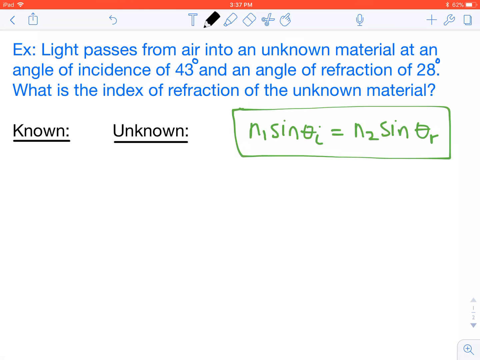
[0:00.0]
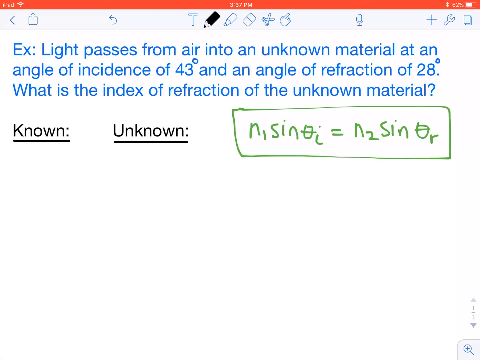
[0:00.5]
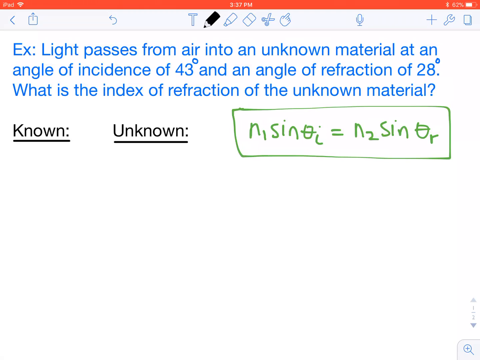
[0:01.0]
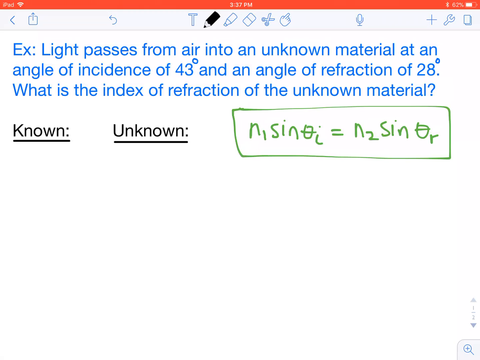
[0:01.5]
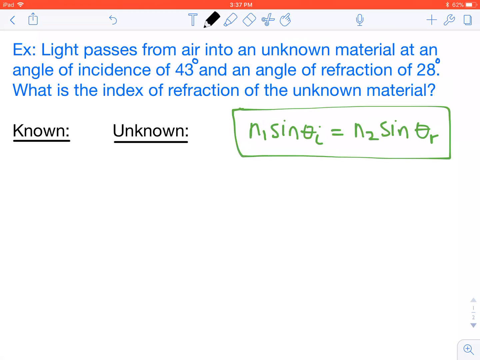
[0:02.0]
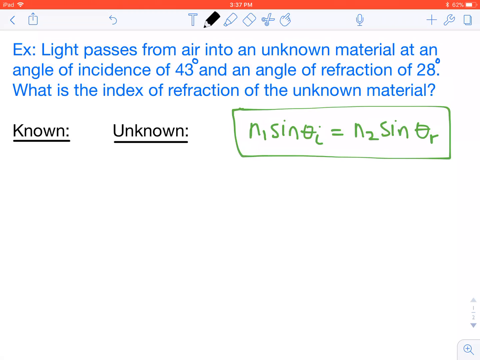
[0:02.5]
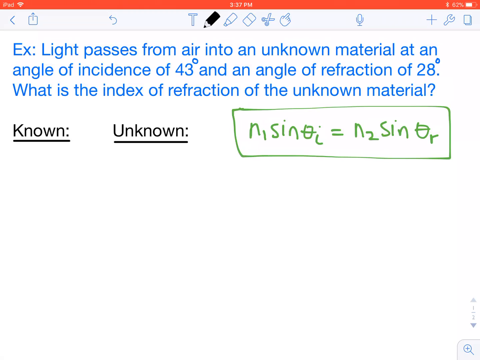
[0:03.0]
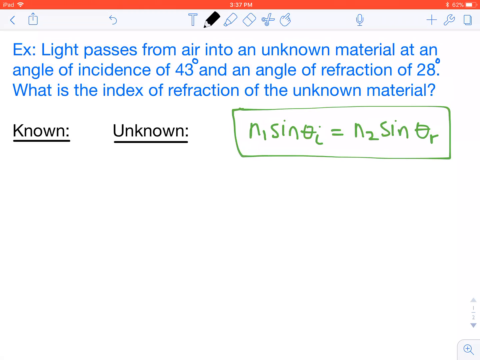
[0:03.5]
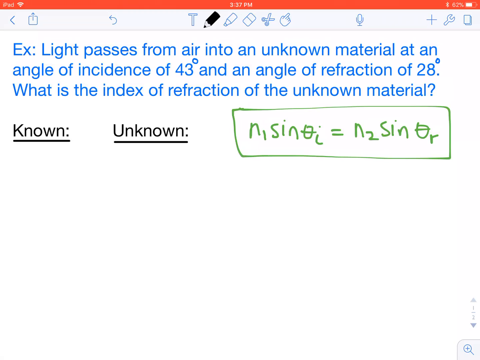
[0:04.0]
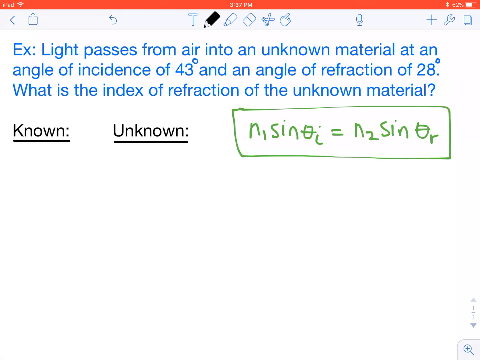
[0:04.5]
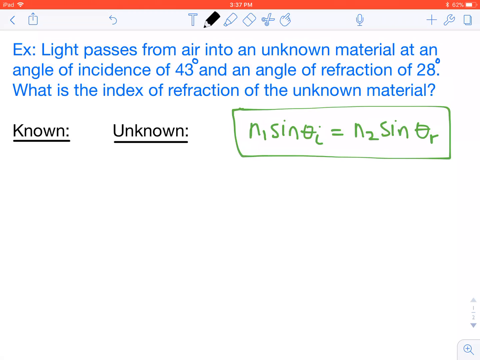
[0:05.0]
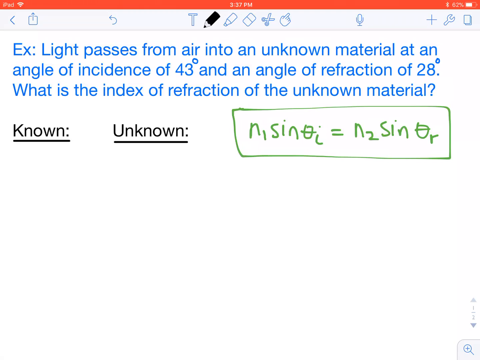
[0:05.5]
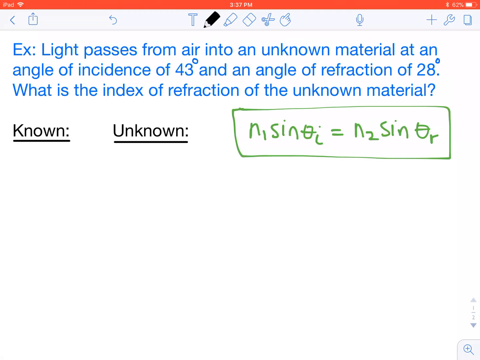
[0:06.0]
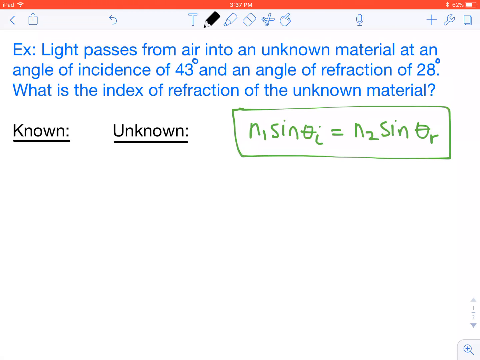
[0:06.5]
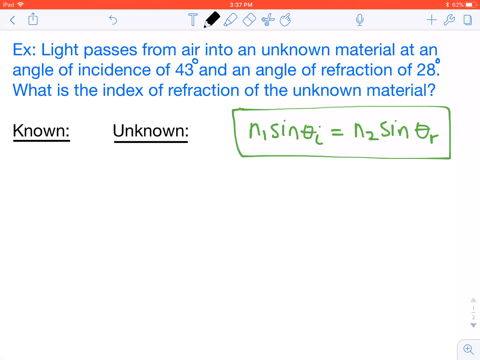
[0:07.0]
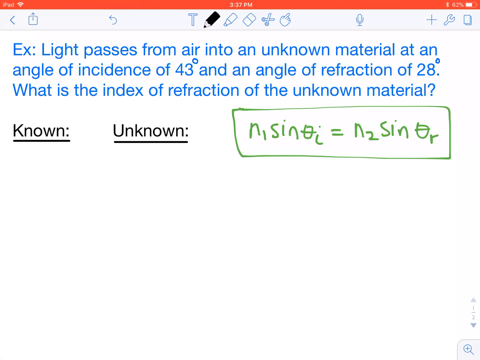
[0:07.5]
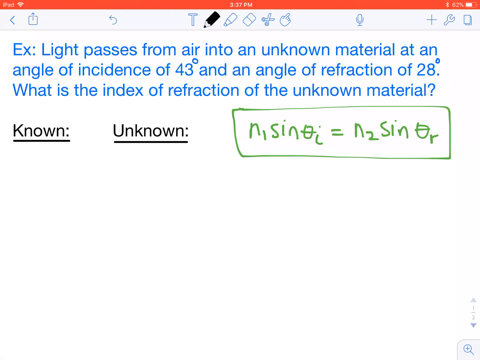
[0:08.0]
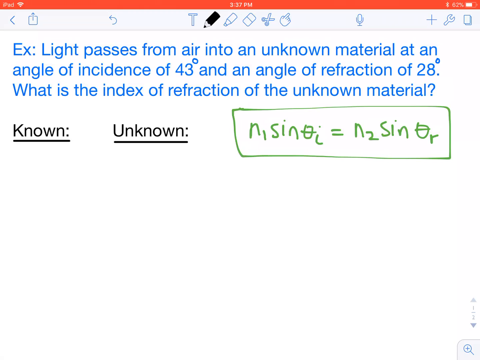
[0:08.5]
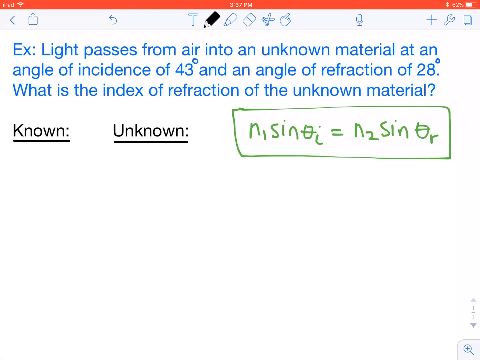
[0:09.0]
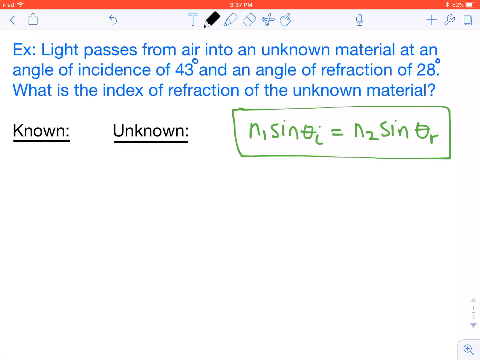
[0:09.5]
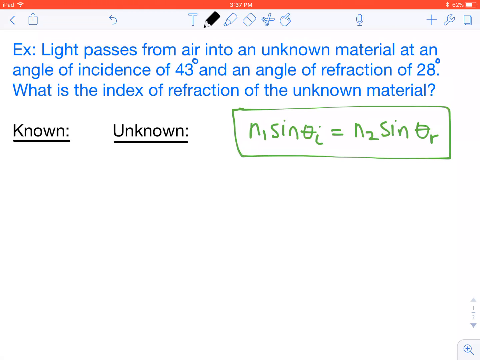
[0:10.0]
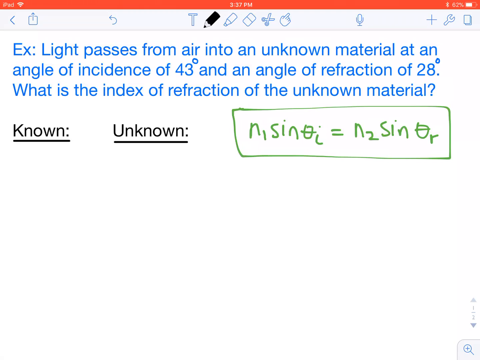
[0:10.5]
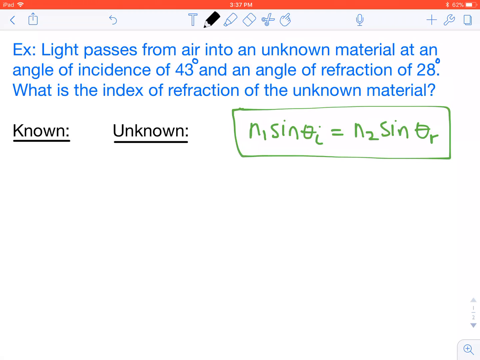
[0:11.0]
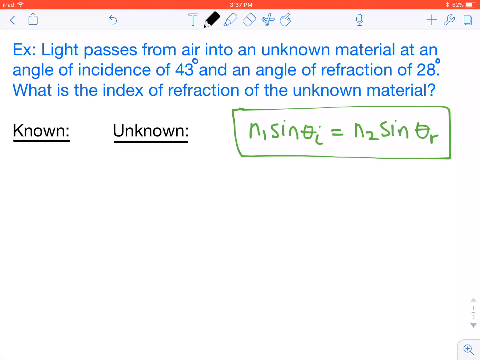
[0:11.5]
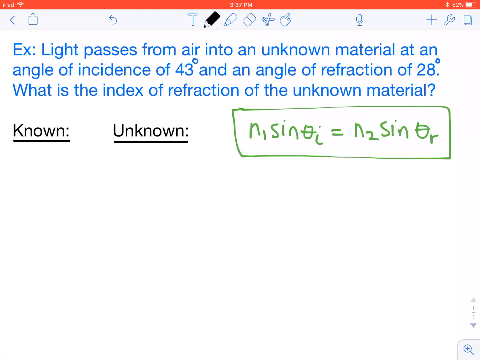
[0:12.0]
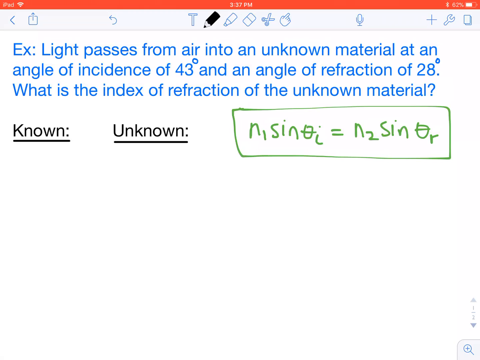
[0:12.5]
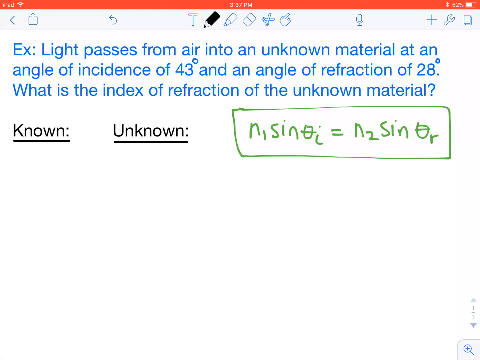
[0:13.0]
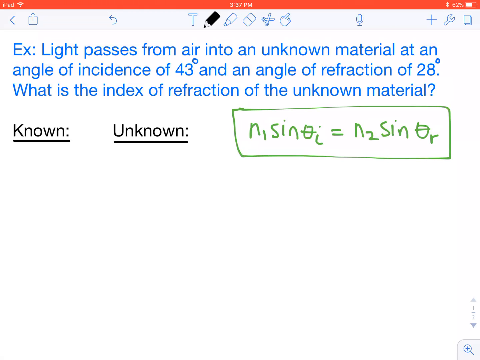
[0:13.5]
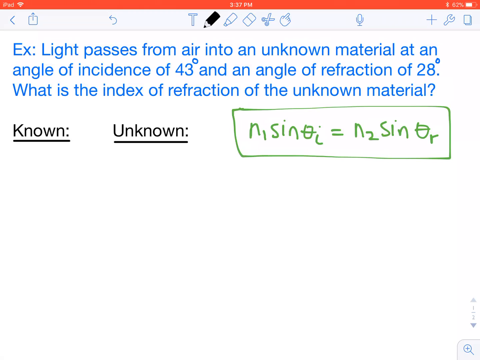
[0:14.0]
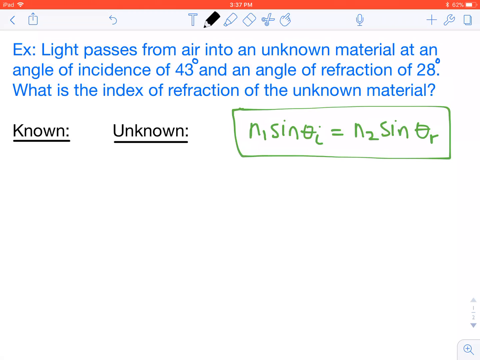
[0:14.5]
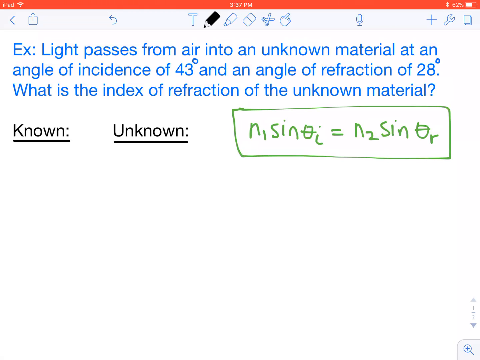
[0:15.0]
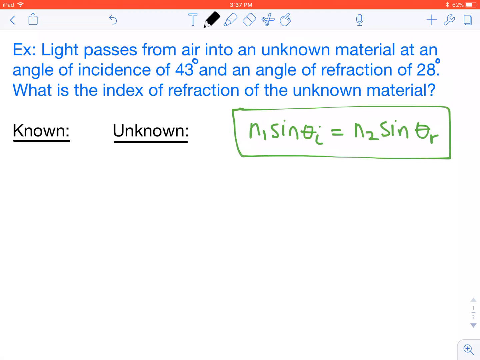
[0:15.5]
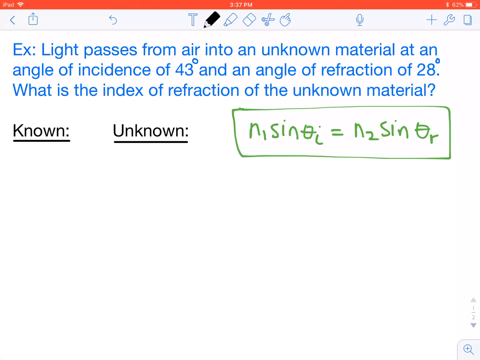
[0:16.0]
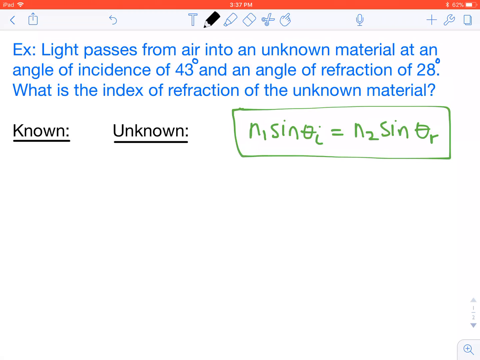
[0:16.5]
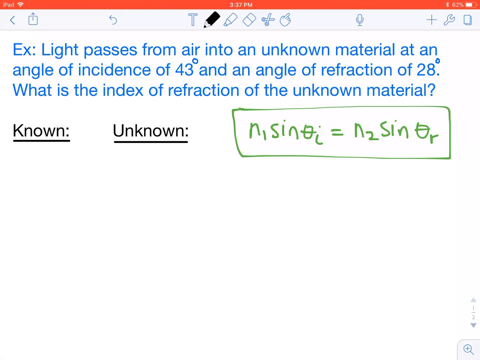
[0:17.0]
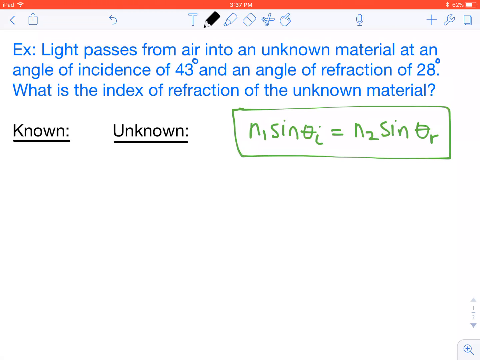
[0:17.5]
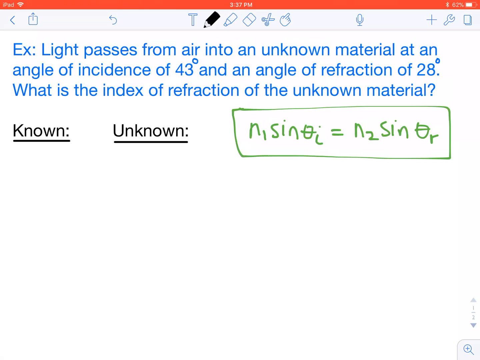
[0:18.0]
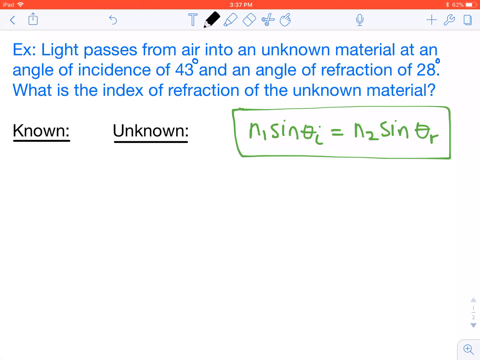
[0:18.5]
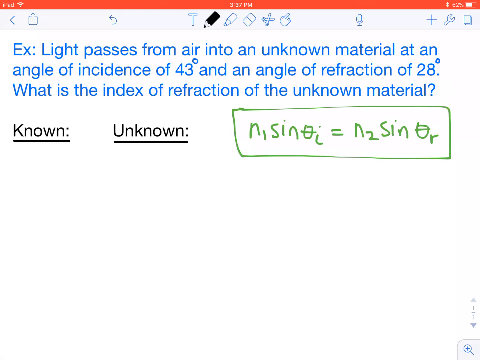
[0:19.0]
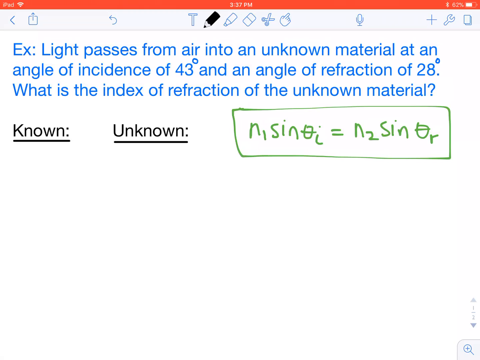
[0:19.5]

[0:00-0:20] Blue text at the top of the page reads "example light passes from air into an unknown material at an angle of incidence of 43 degrees and angle of refraction of 28 degrees what is the index of refraction of the unknown material", which seems to be the main question of the video. Right below it is a "known:" entry area, and right next to that is "unknown:", also followed by a colon, so it looks like items will be listed in these known and unknown sections or columns. To the right of the known and unknown sections, an equation is written in green ink and enclosed in a rectangle.